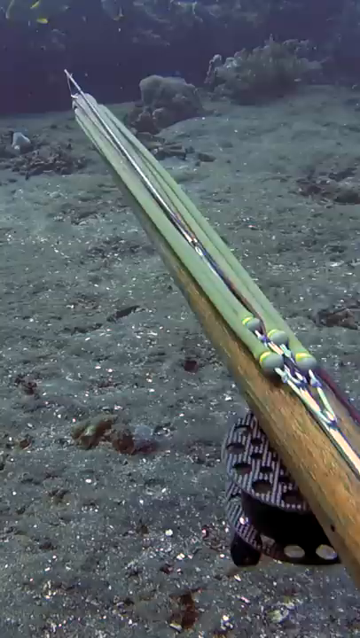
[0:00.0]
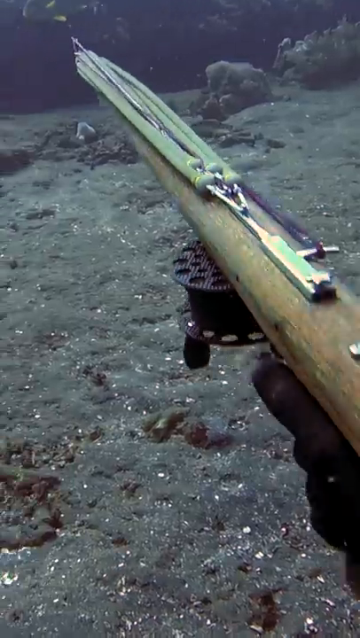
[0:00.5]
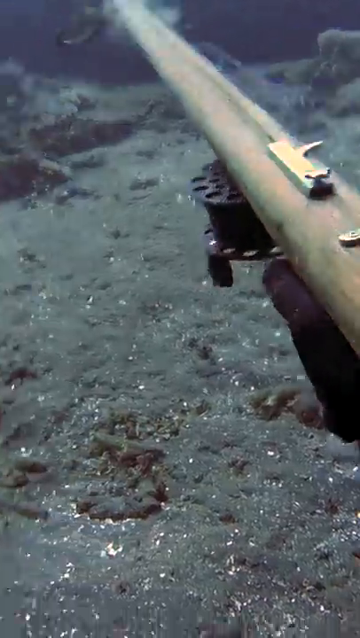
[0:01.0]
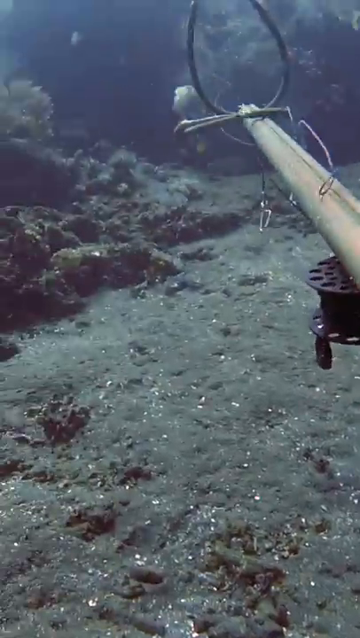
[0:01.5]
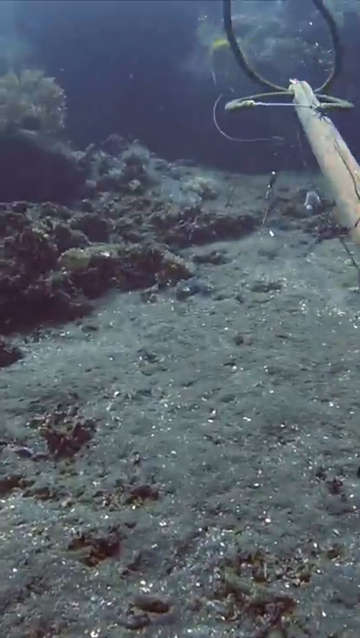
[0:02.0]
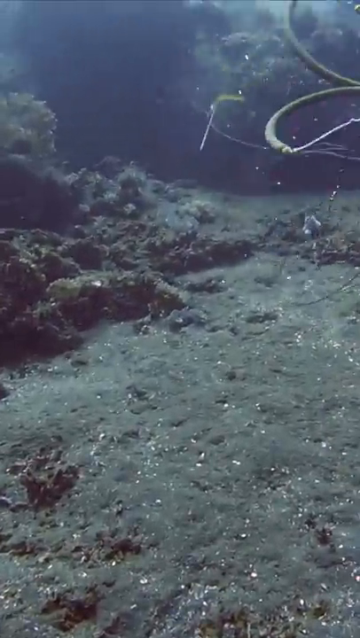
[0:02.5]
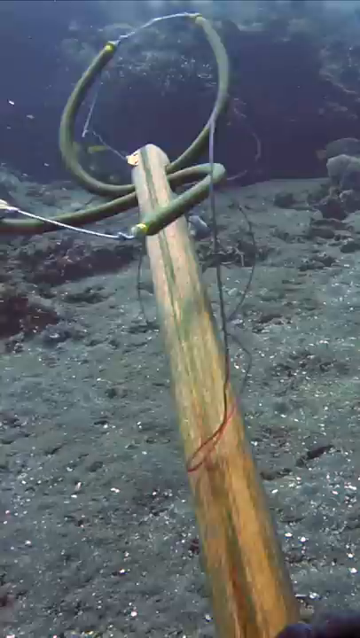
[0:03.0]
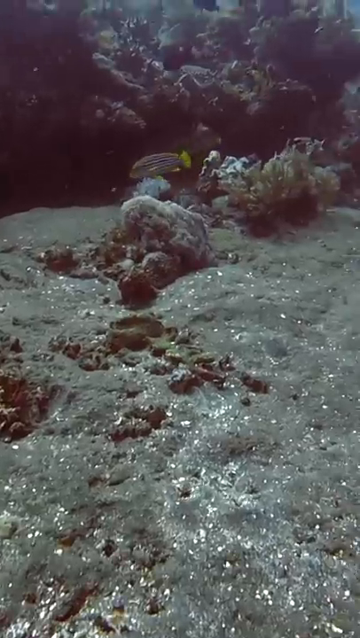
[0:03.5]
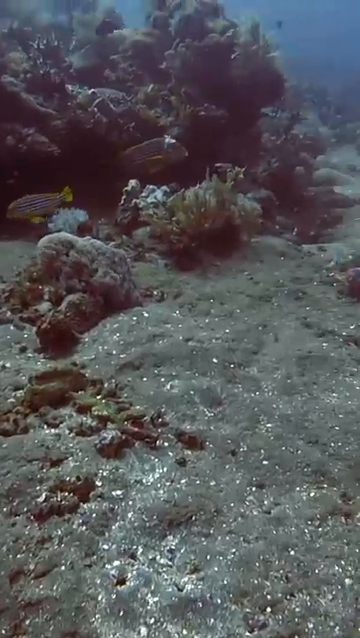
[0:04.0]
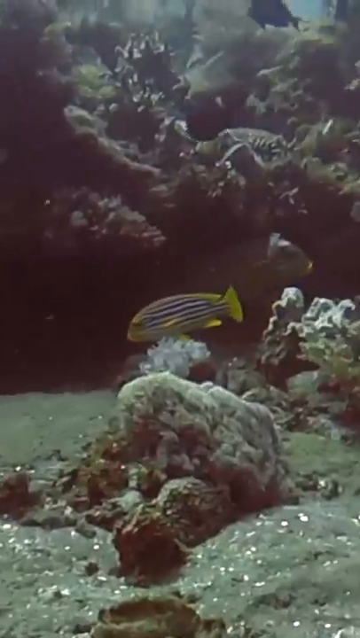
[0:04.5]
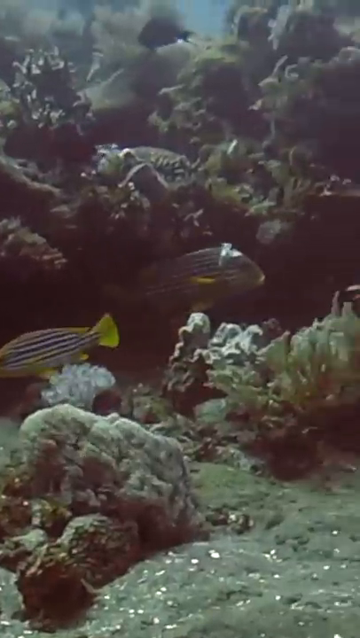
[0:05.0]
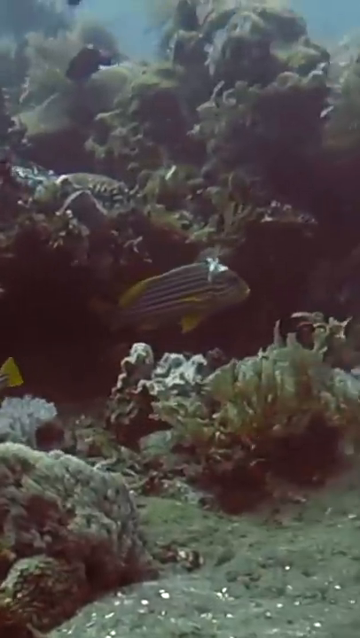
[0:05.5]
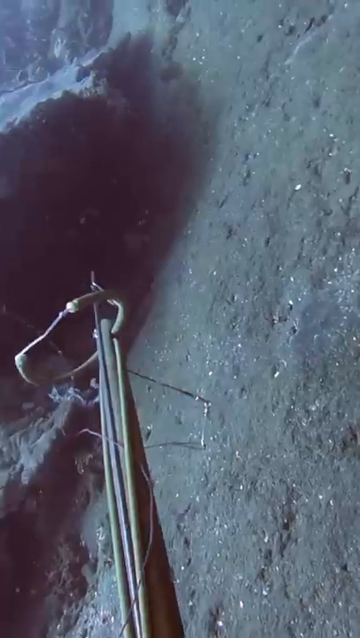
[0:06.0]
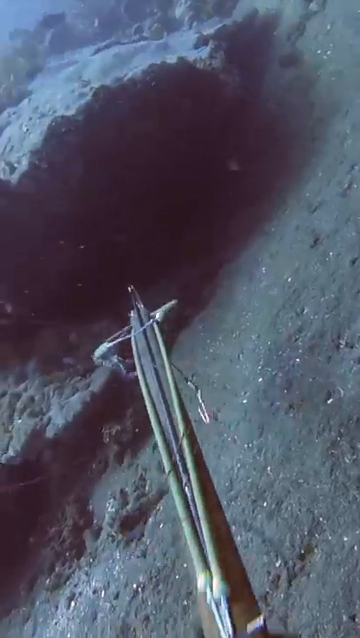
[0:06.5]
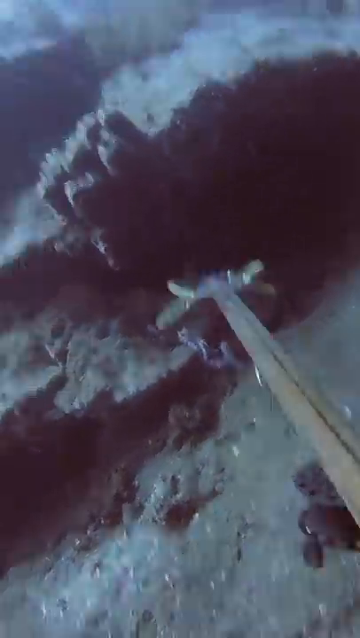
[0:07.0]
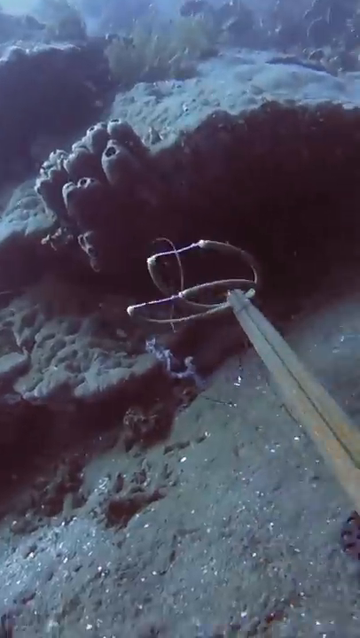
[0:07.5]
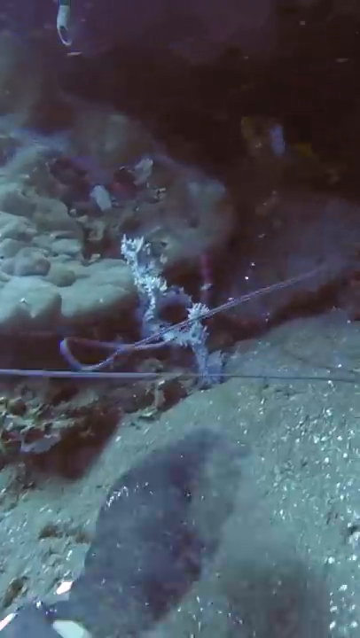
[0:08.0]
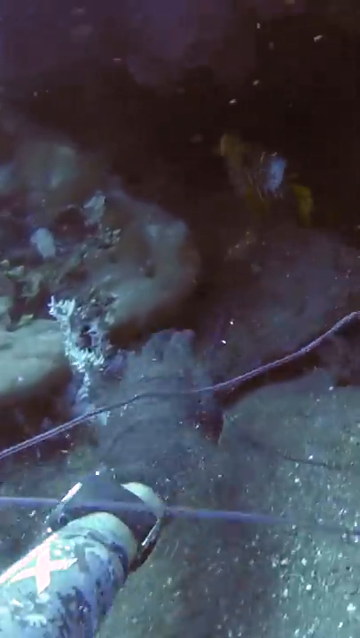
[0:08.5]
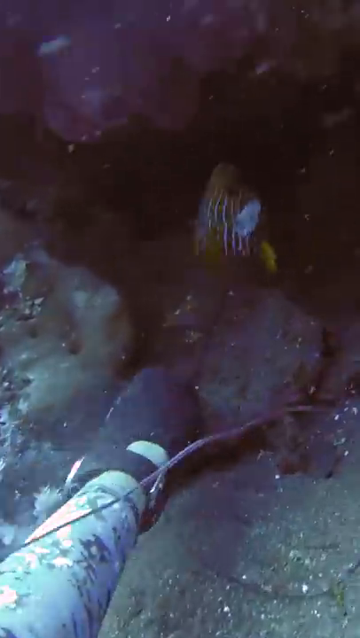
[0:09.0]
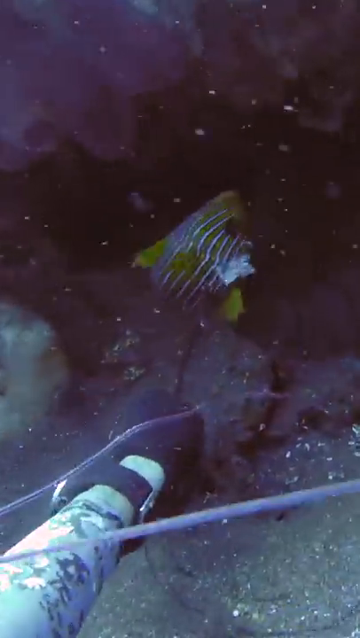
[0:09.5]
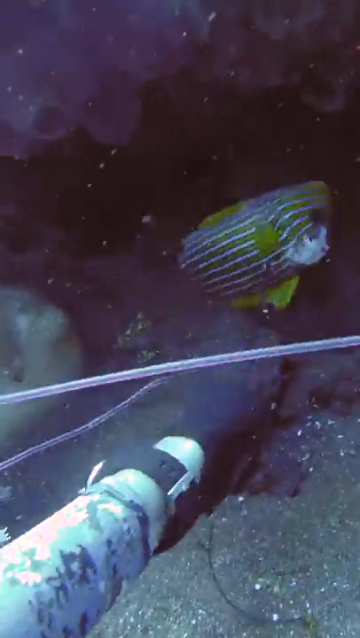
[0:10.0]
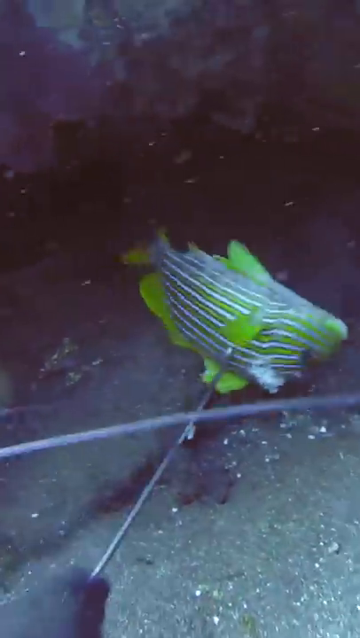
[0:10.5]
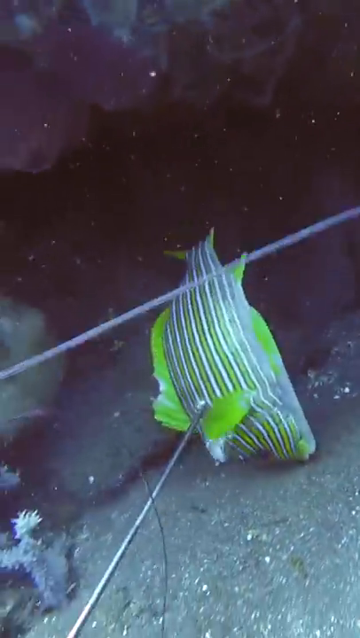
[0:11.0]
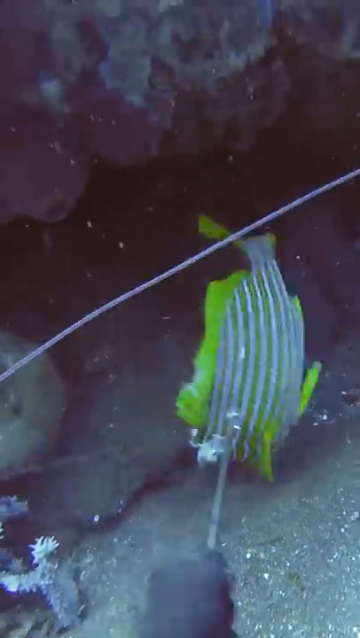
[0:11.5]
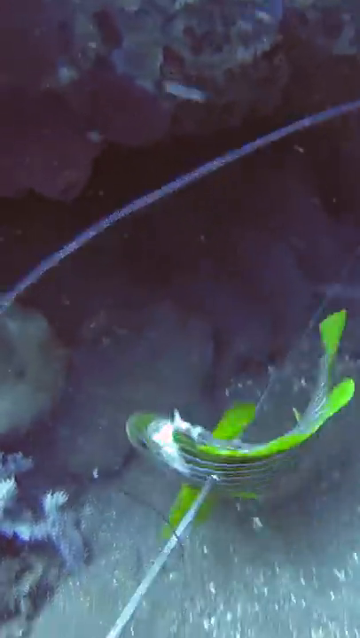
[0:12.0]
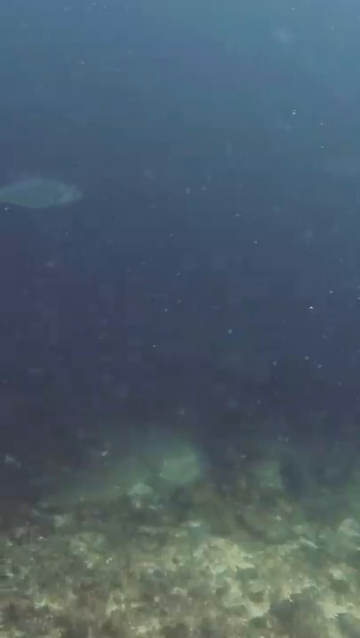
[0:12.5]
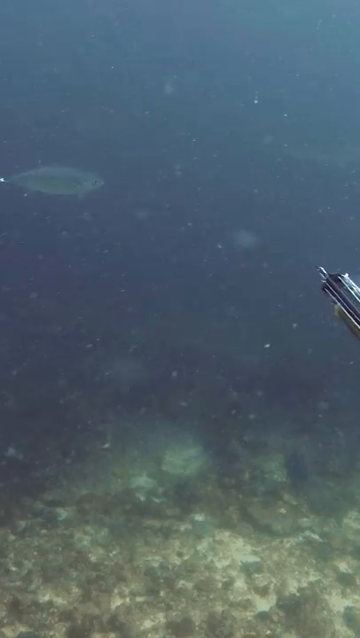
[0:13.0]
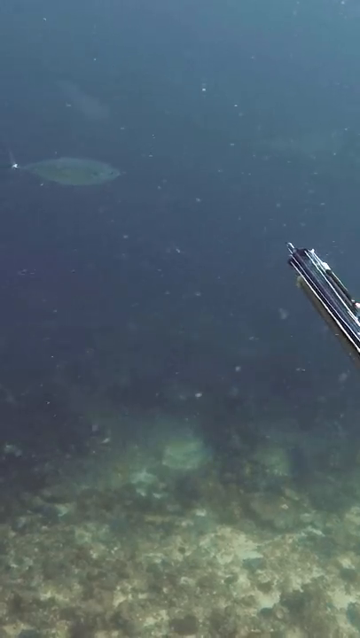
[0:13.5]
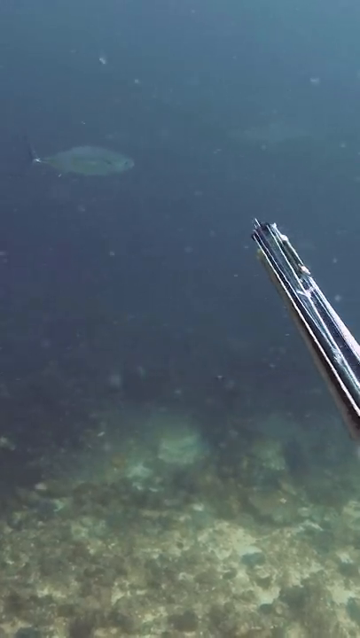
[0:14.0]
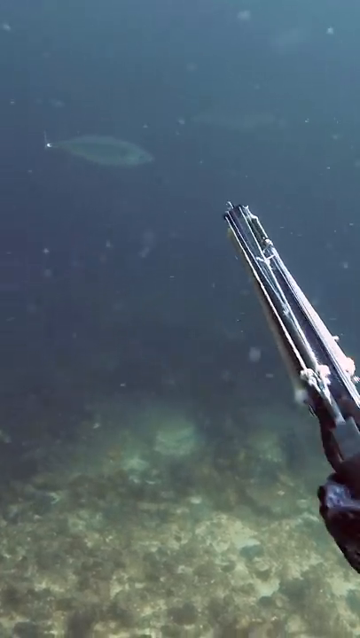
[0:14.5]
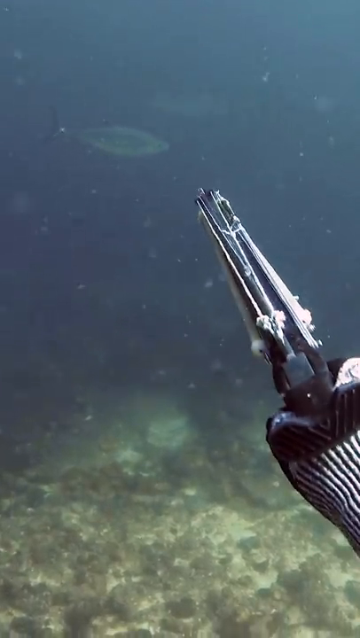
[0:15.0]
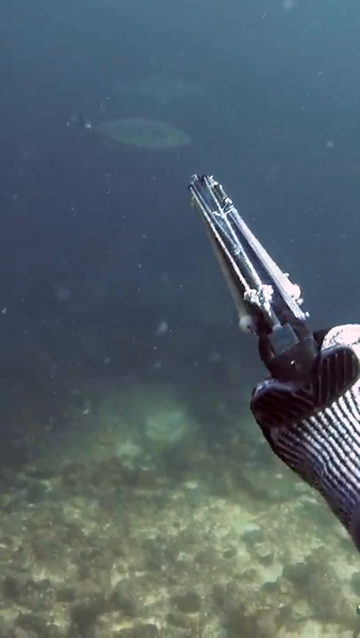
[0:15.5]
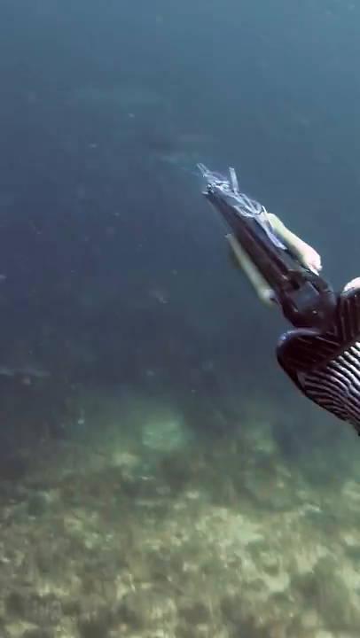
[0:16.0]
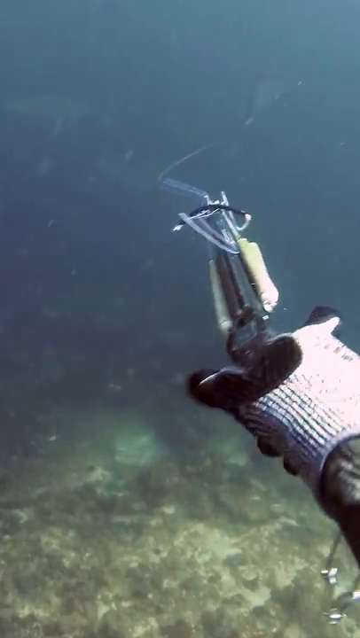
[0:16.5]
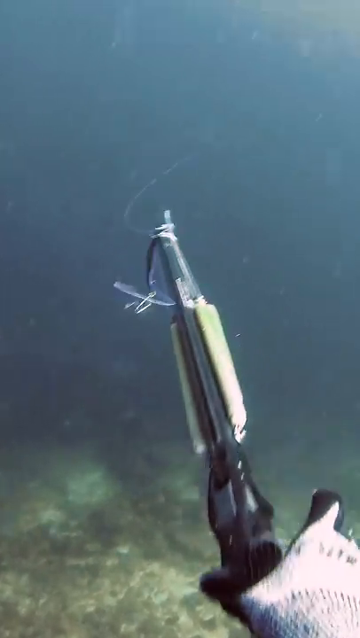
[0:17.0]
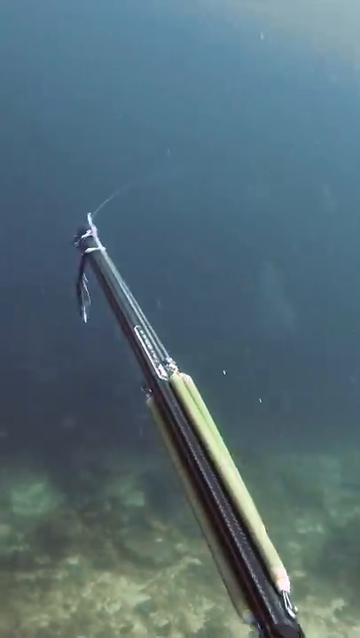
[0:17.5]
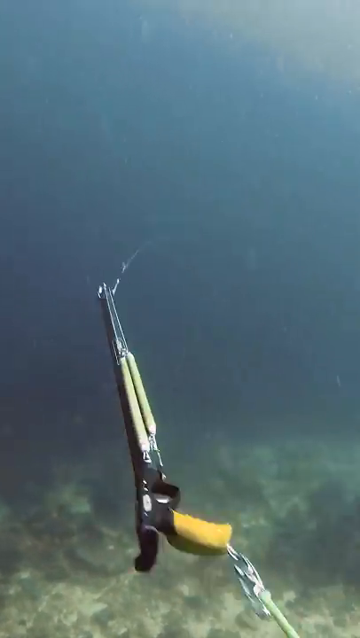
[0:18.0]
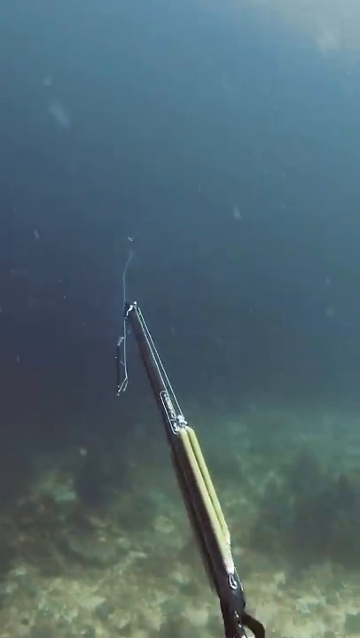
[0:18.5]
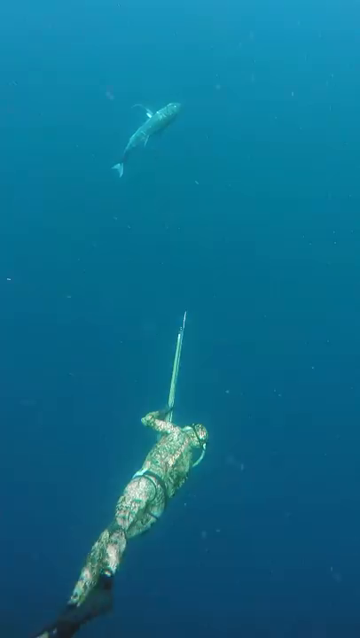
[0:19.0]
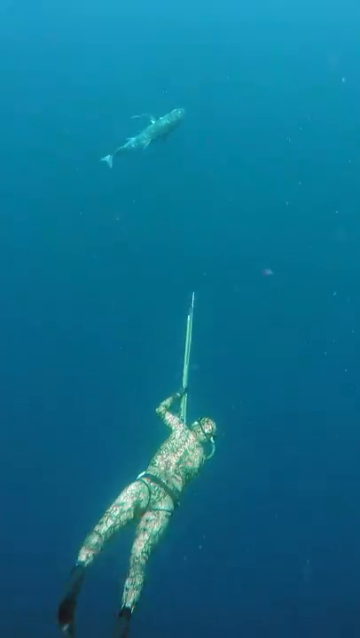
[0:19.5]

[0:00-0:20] Shot in portrait mode, the video opens with an underwater point-of-view shot from a diver holding a spear gun. The diver appears to be at the bottom of the ocean, and it seems not to be very deep, since everything is clearly visible. The scene is well lit, with daylight penetrating the water, and the diver is probably standing on the bottom. The spear gun in the frame immediately shoots. The footage cuts to some colorful fish, large black and yellow fish swimming along a coral reef. It cuts again to the spear fisherman putting a spear into a hole in a small coral area whose inside cannot really be seen. He has speared one of the black and yellow fish, and his left hand reaches in to retrieve the fish, which is speared through its side.